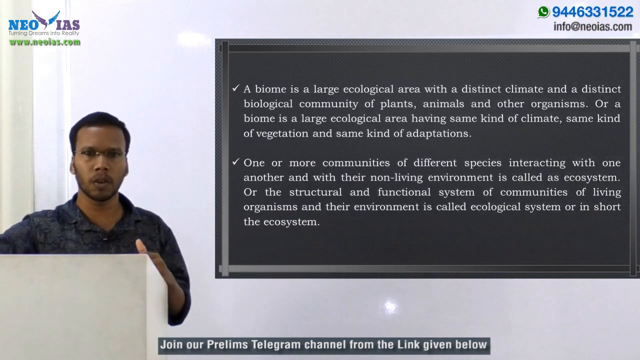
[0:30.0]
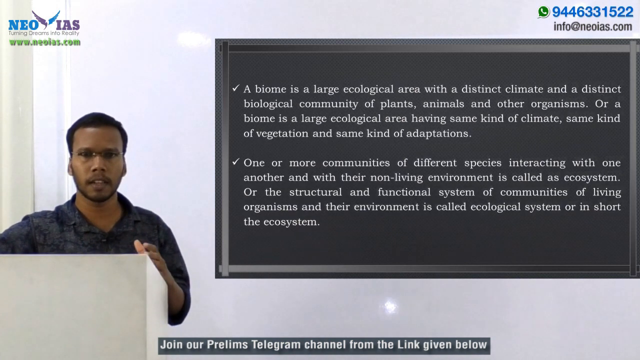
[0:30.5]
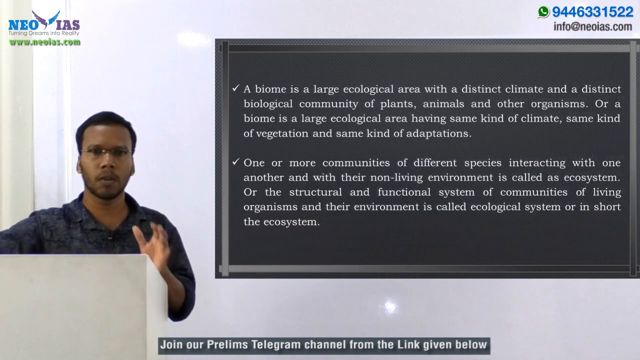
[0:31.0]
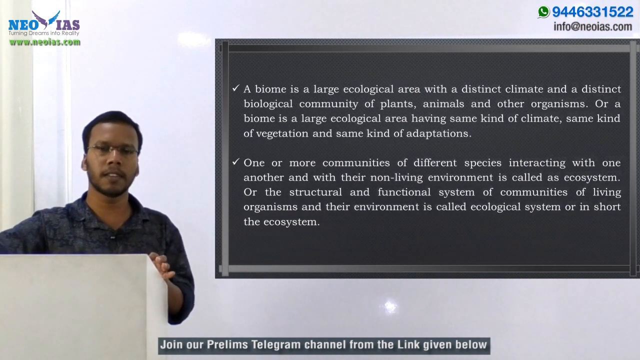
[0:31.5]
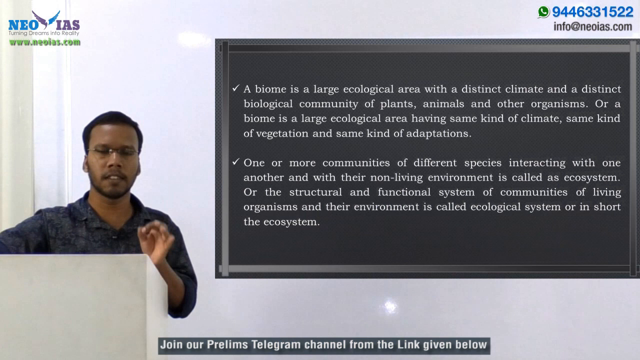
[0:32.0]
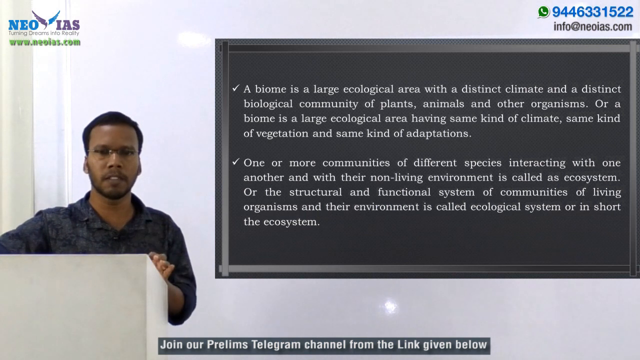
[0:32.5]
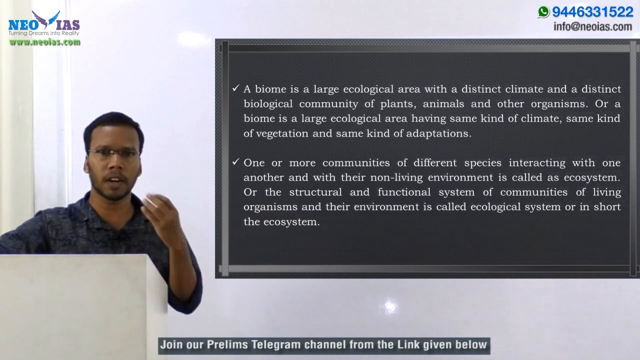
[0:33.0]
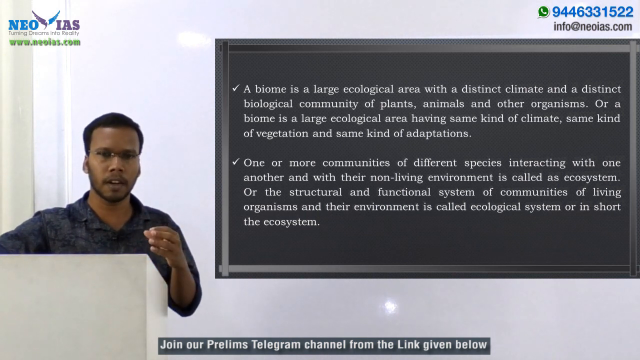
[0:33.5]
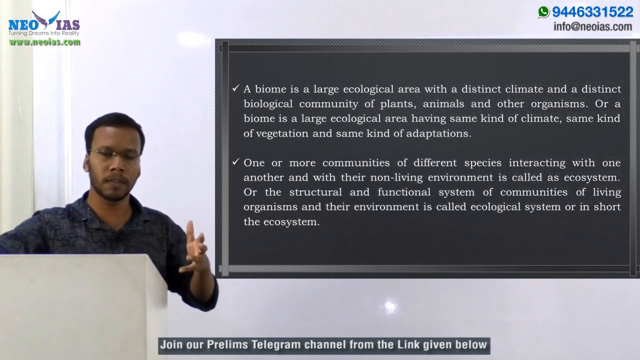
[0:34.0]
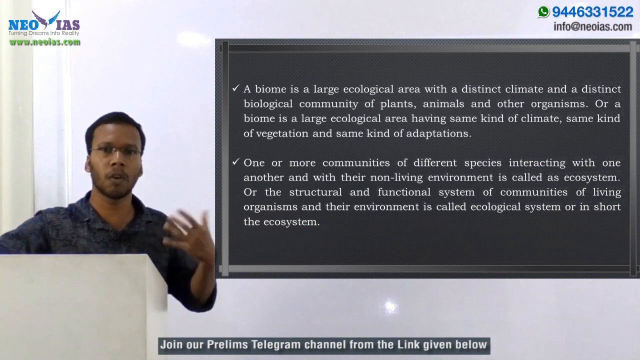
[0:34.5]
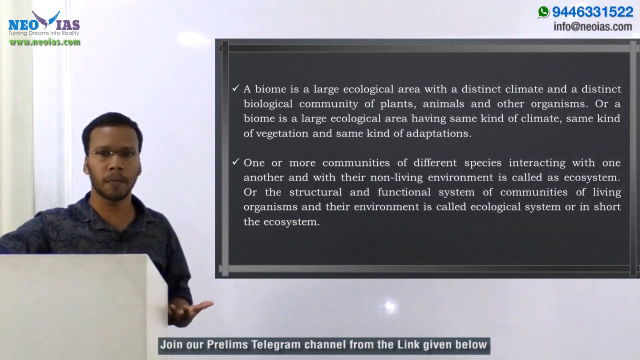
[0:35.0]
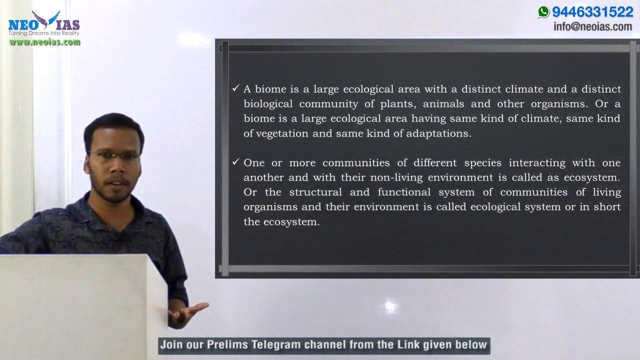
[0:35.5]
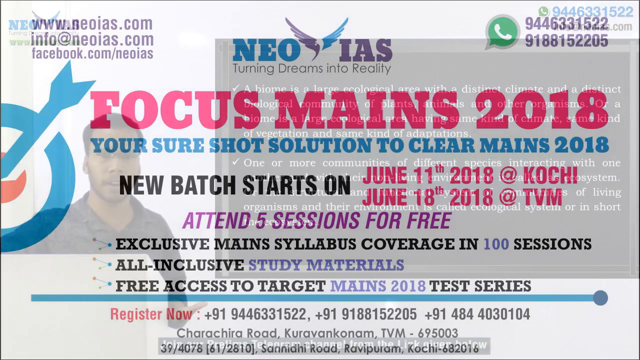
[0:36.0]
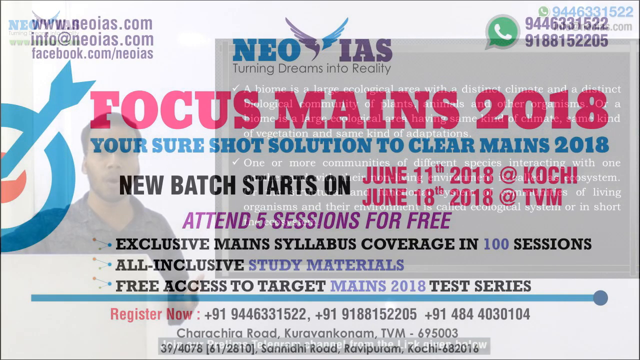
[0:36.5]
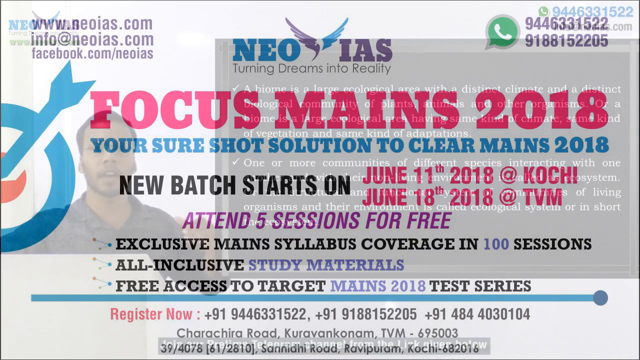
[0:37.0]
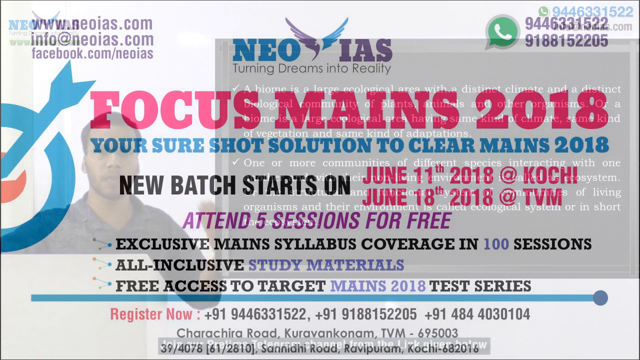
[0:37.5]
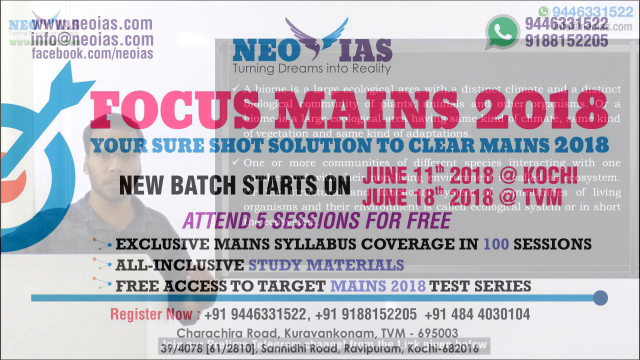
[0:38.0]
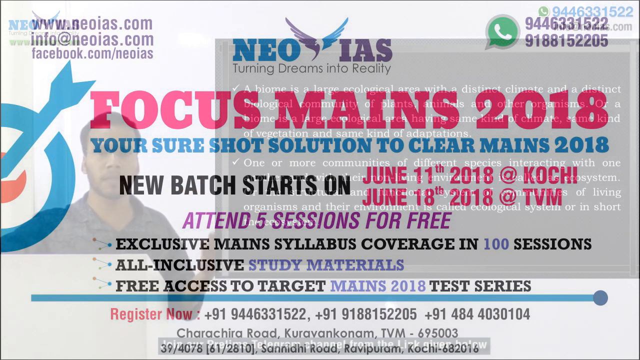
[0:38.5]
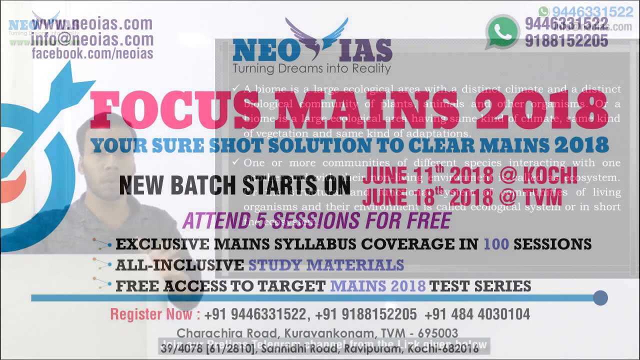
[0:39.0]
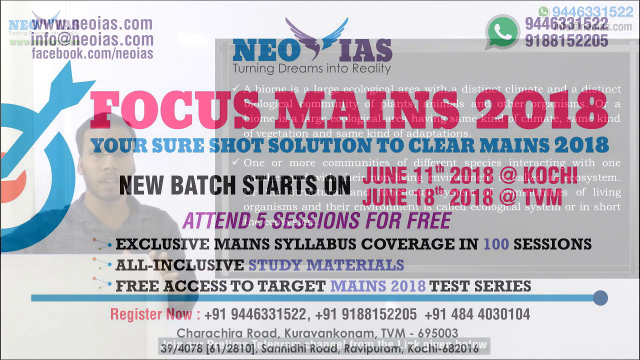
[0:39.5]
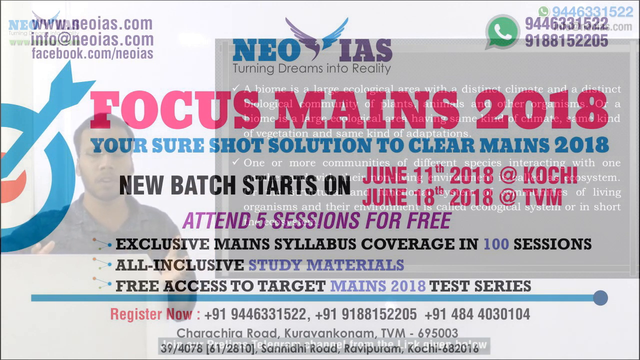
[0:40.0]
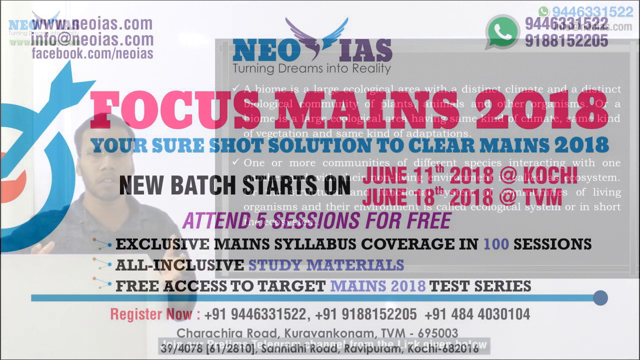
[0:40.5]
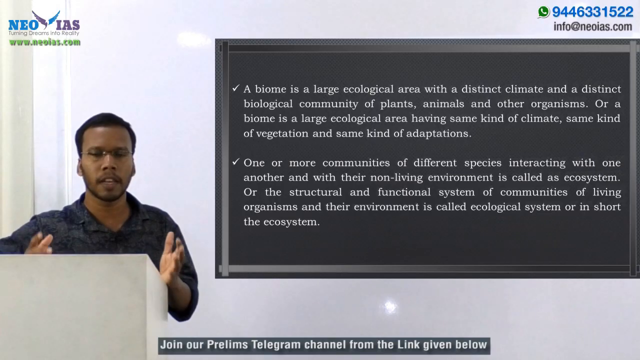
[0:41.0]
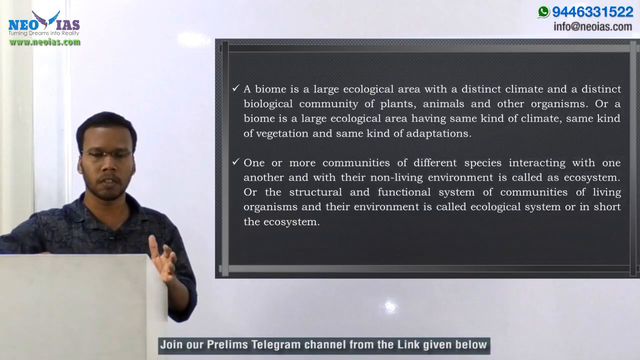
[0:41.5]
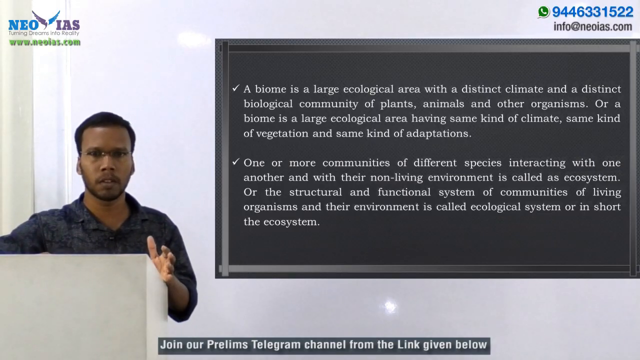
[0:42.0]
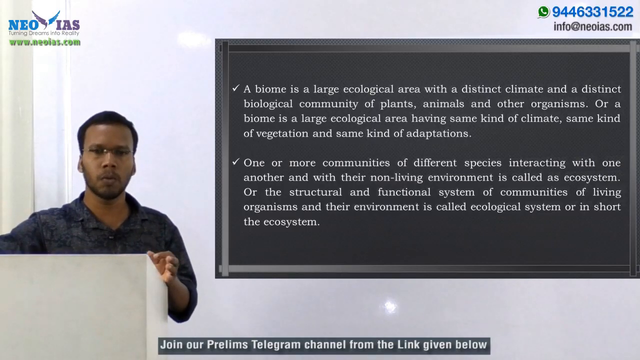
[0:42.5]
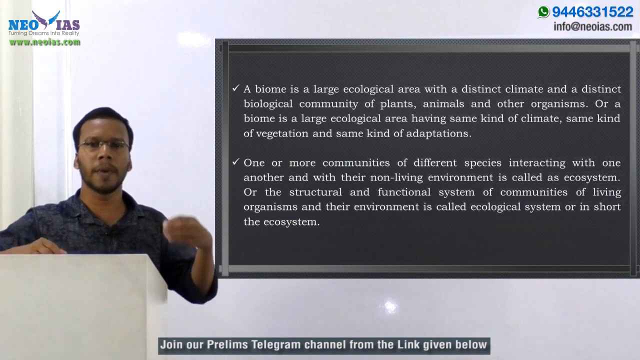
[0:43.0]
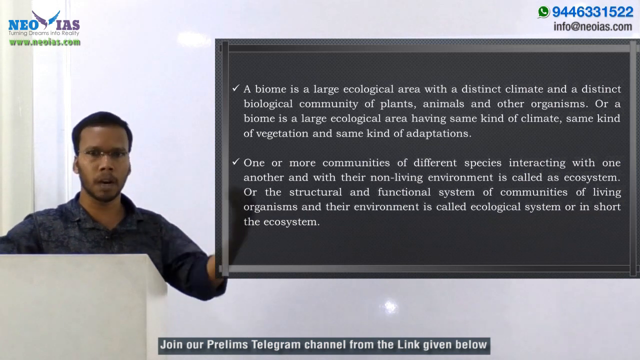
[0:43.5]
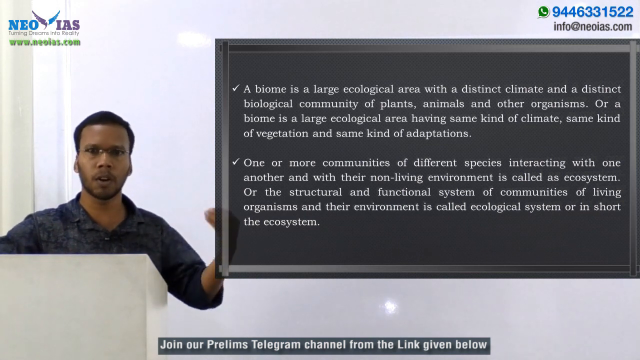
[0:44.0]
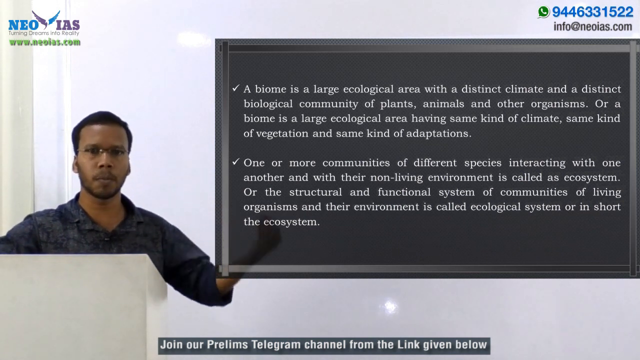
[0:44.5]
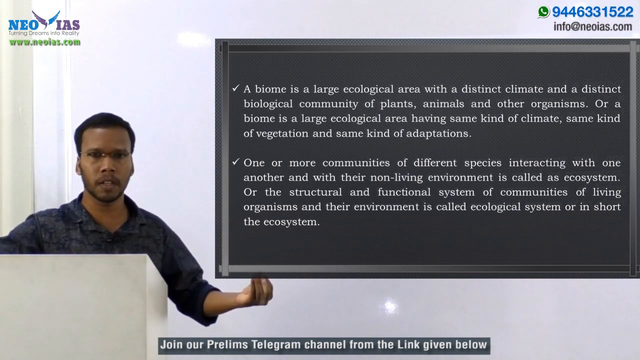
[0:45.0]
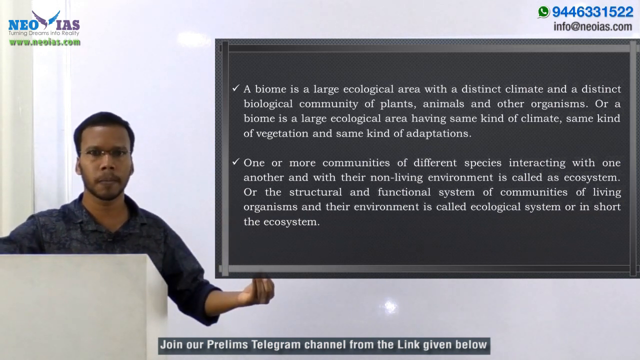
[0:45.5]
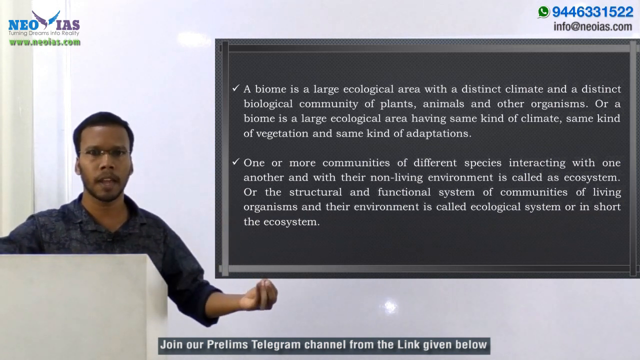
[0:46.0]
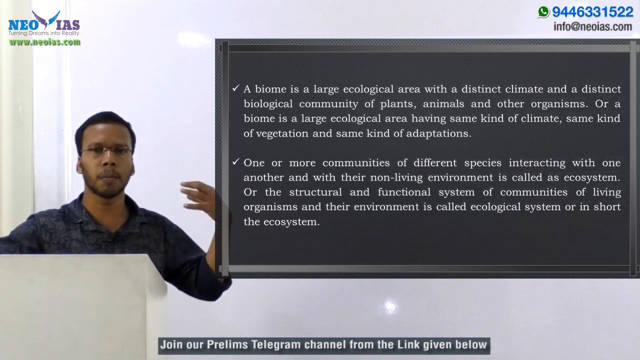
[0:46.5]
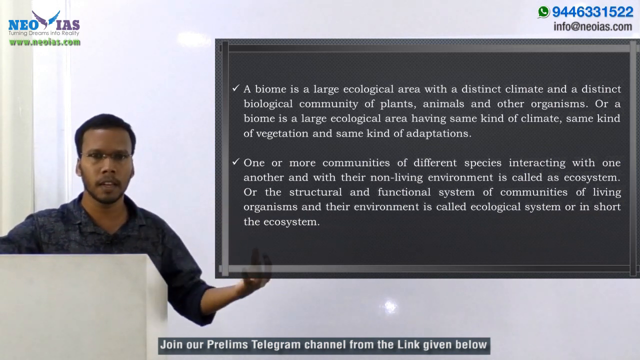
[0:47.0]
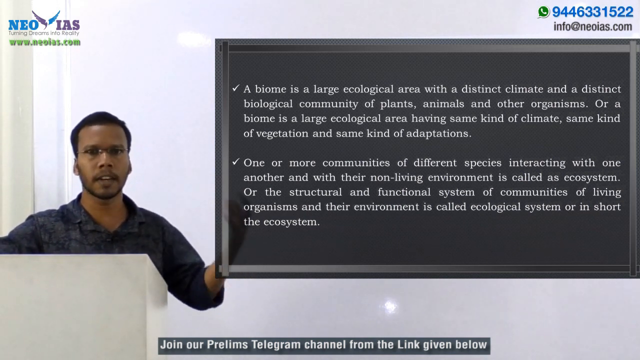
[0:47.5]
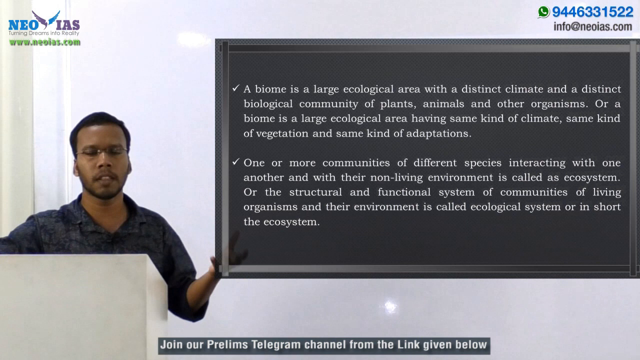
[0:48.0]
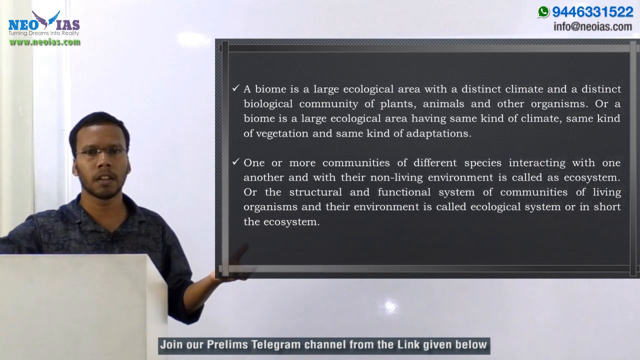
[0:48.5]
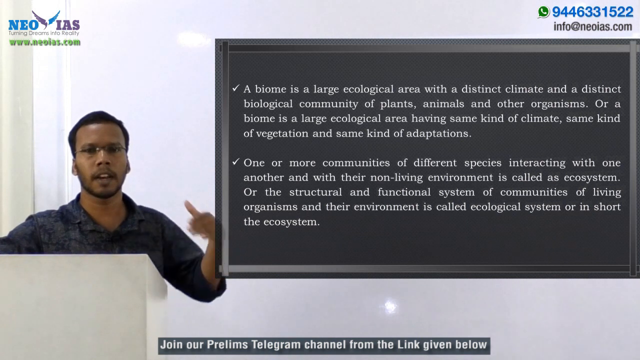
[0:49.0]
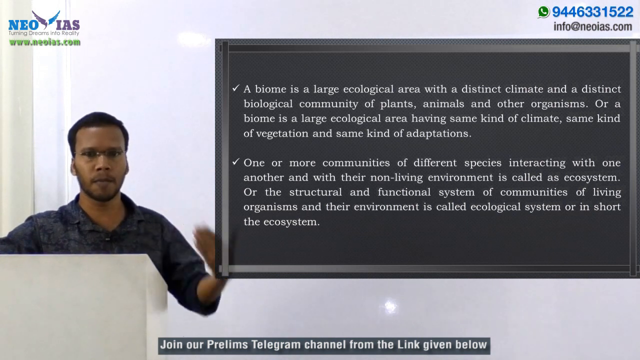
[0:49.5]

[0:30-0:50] The man appears to be a lighter-skinned Black gentleman, and his ears lie almost flat against his head. At the very top of the screen is "neo" in green with a bird with its wings out, and "ias" to the right of it. Underneath, in faint, thin text that is hard to read, it says "turning dreams into reality." Below that, in bigger green text with a shadow, is "www.neoias.com." In the opposite, right corner there is a green telephone emoji with "944-633-1522" in blue, and underneath it "info@neoias.com." The video then shows him again, still gesturing and talking. Next, a screen shows websites at the top left, two for neo and one for Facebook, and in the center in pink it says "focus main 2018." There is more blue text with two different dates, five different sessions, and mention of syllabus coverage, plus "register now," three different phone numbers and the location; this text is faint and hard to see. As he keeps speaking, the video returns to the same animated blackboard chart about the biome definition and one or more communities of different species interacting.